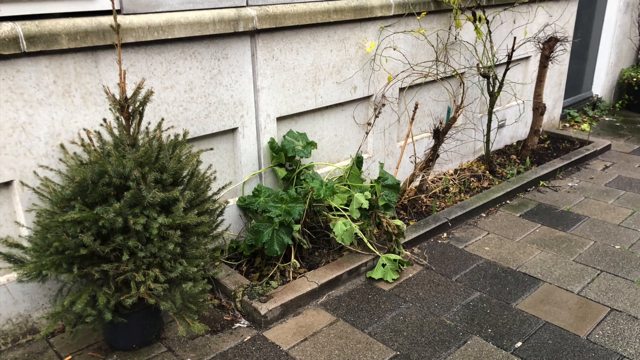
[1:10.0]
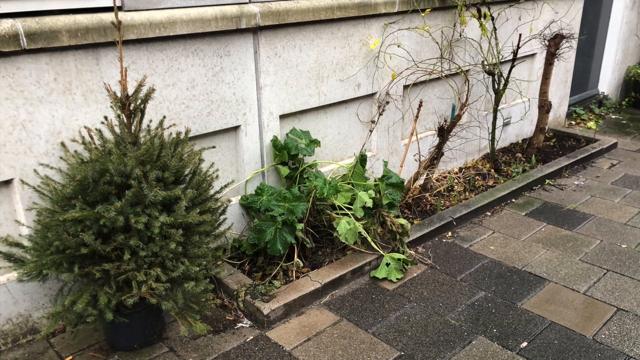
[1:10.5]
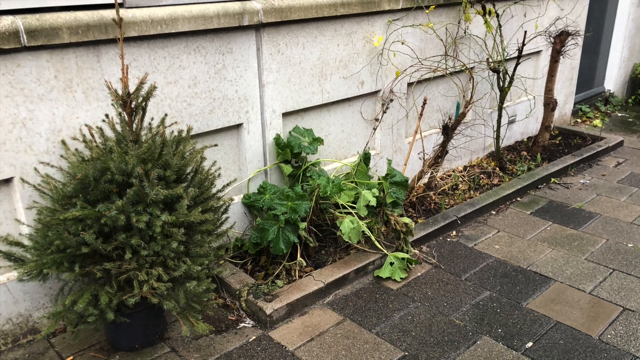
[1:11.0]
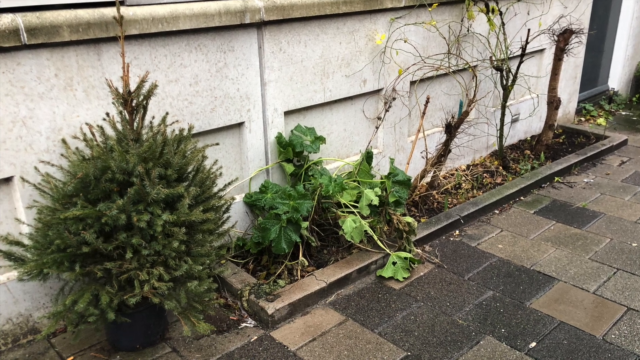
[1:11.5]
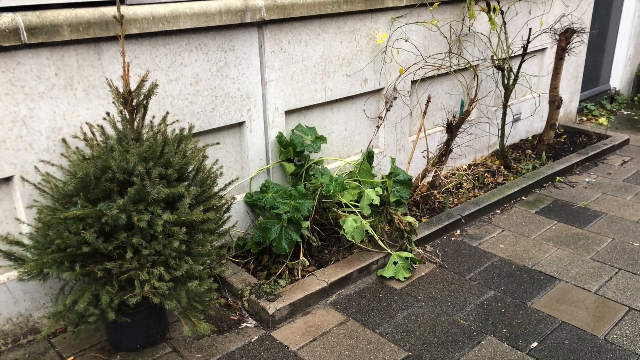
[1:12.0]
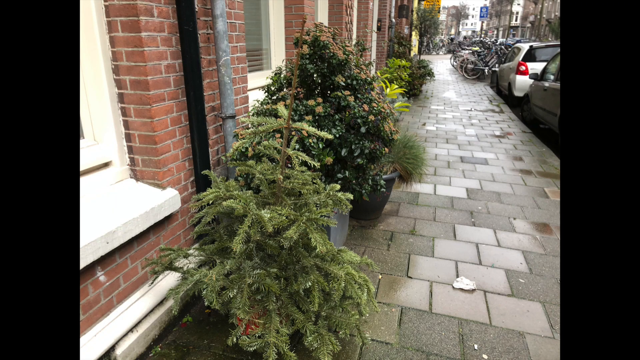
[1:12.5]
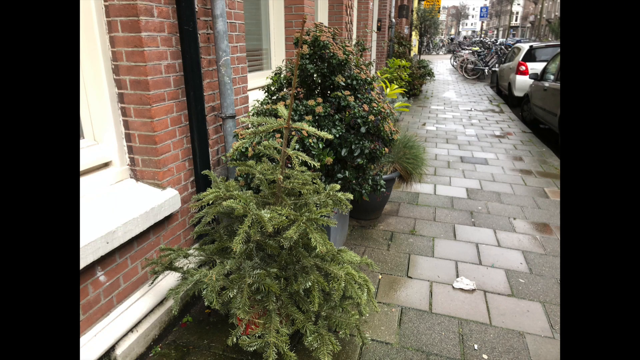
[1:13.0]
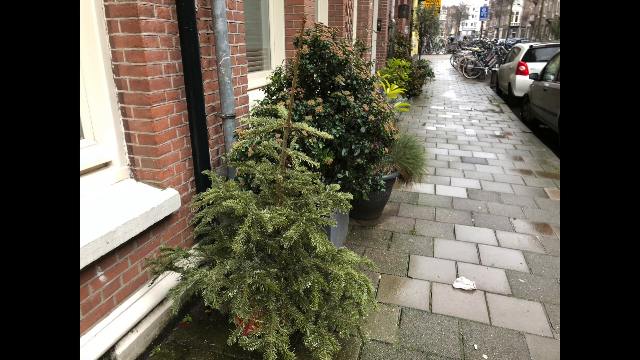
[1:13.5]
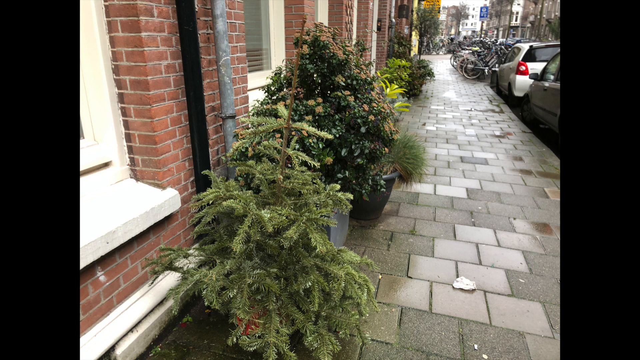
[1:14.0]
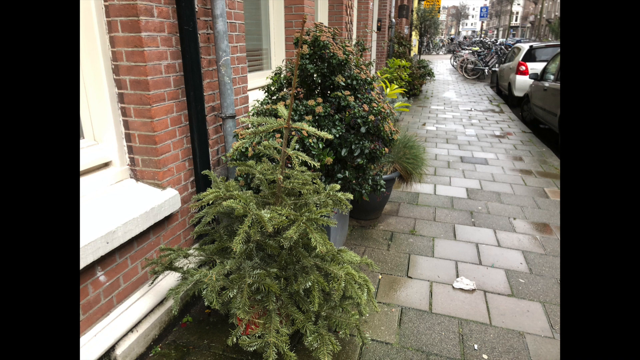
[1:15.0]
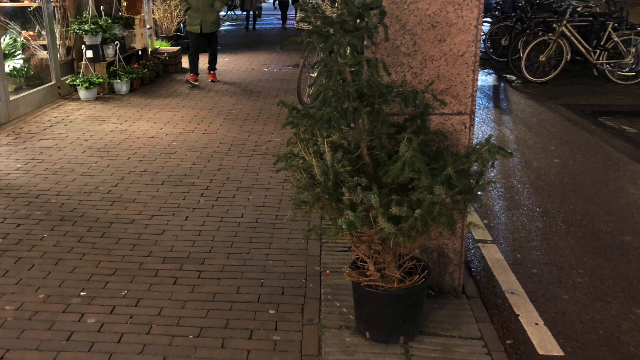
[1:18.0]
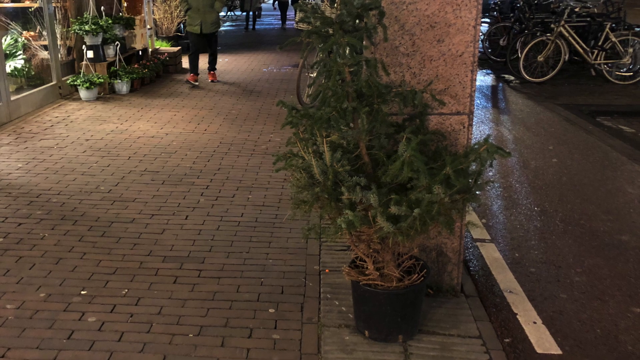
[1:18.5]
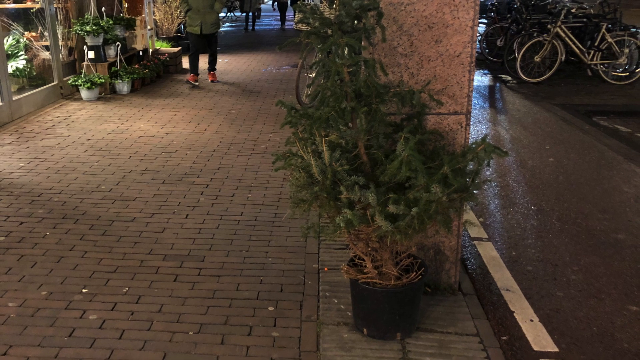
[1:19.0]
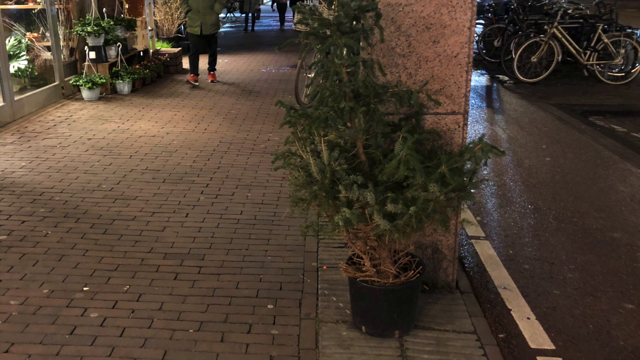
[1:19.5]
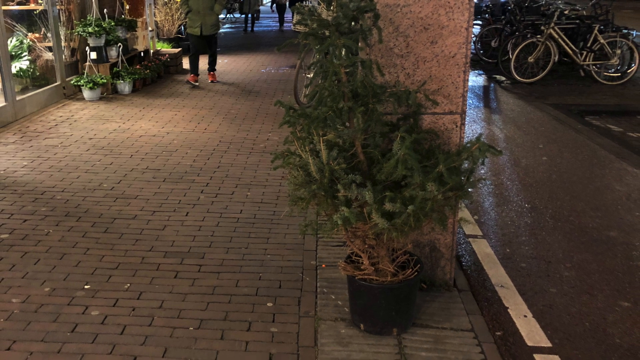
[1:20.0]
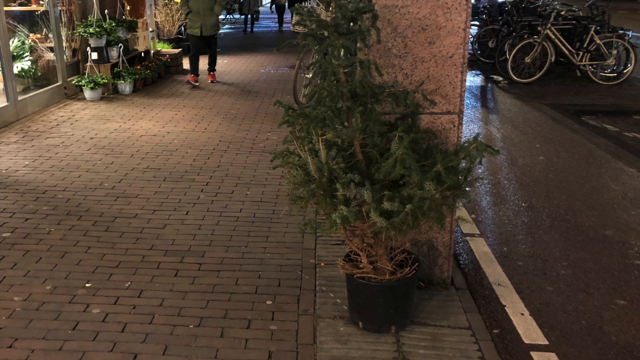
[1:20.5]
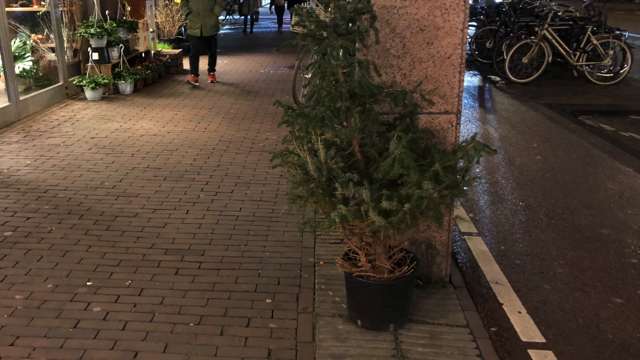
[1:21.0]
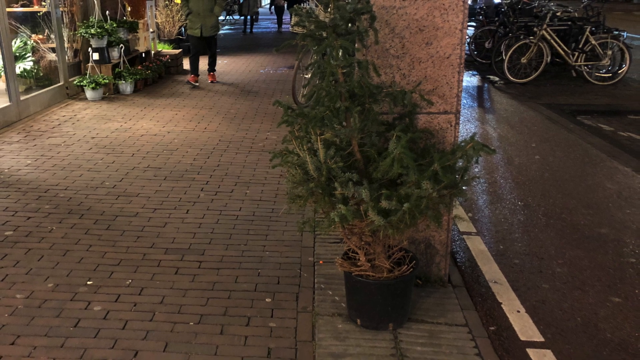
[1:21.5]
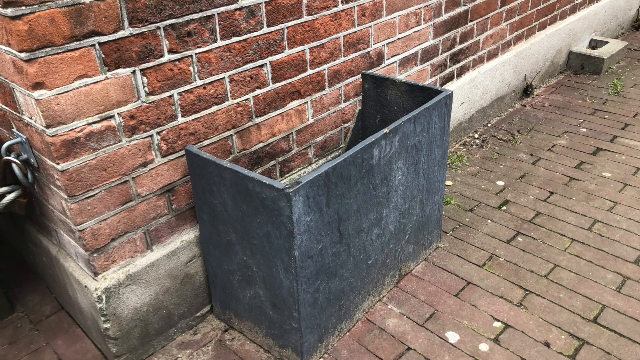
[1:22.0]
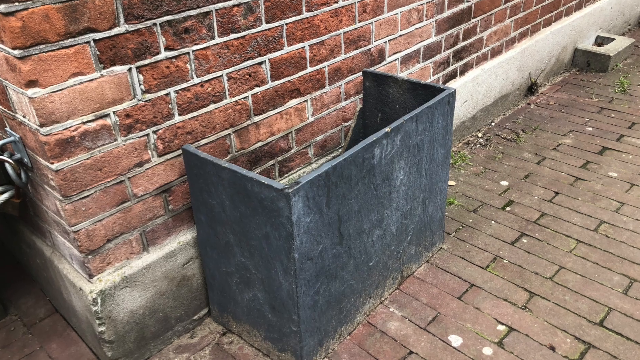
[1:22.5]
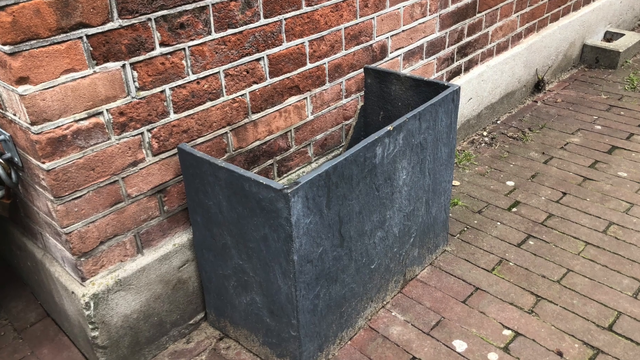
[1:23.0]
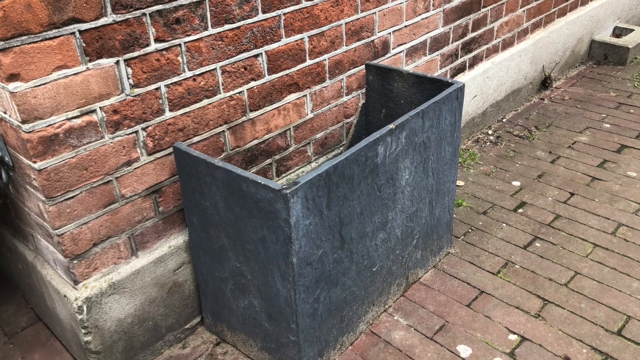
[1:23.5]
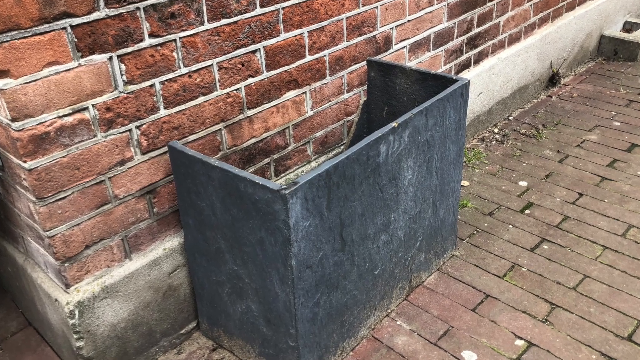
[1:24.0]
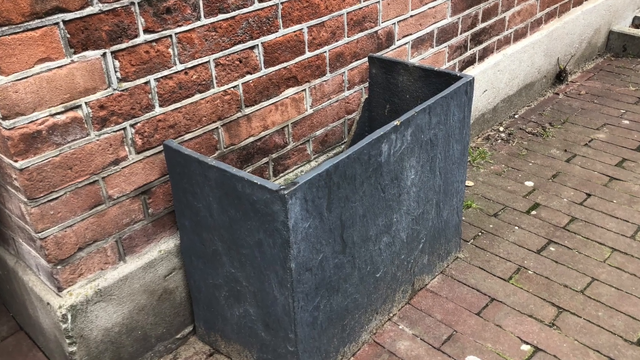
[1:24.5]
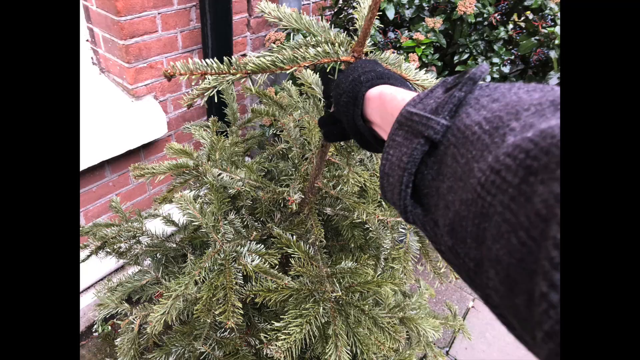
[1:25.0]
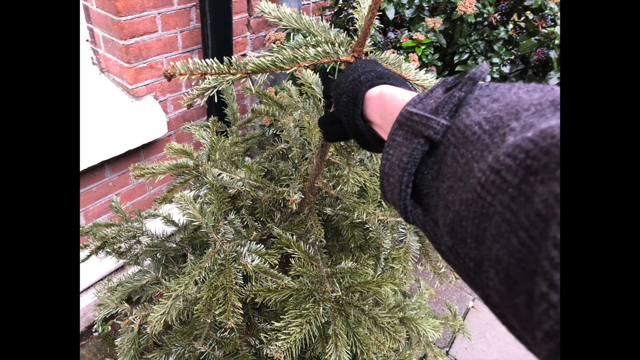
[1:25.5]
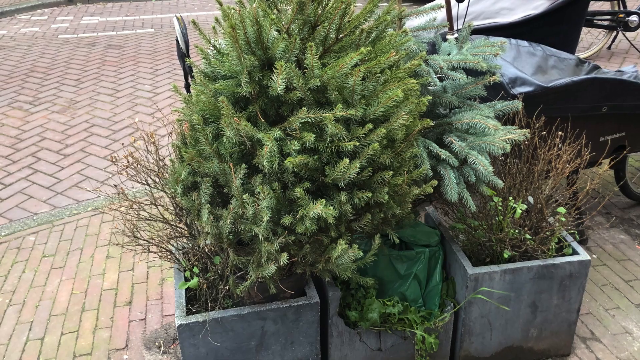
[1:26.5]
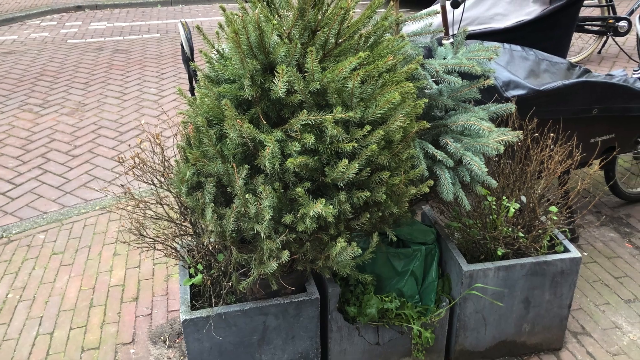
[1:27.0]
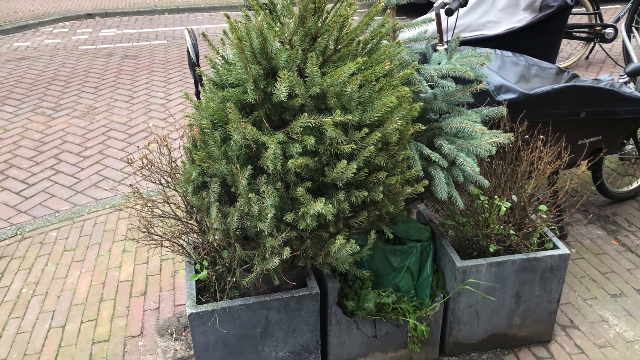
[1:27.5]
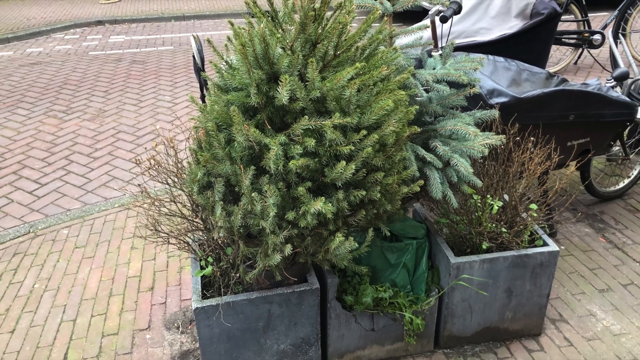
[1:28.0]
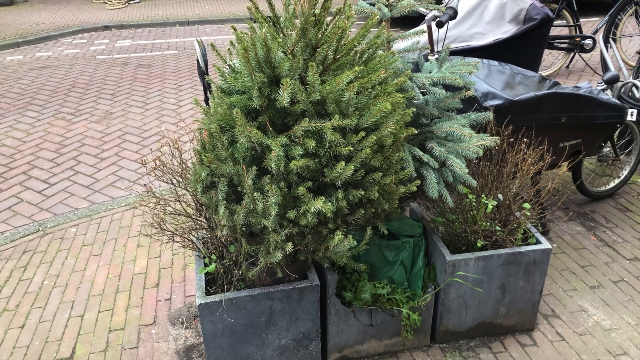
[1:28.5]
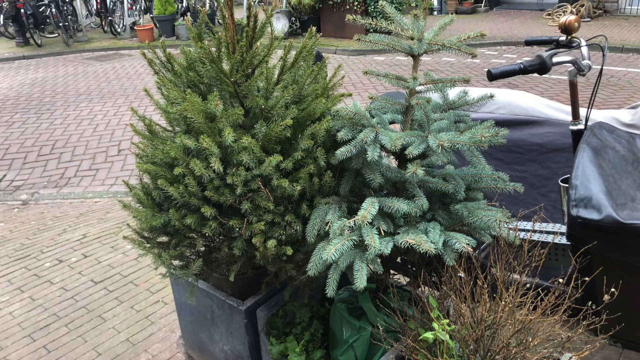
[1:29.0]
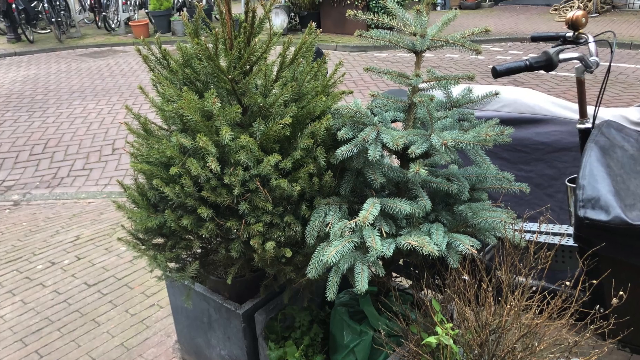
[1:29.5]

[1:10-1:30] Many bicycles are parked, along with parked cars. Plants by the park look very healthy, and some flowers are blooming. People walk on the pavement, and something broken lies by the pavement, possibly a flower pot. A white person is gardening and pruning, and the plants are in perfect condition. One bicycle looks like a quality one. The pavement is wet, apparently from earlier rain. There are blue street signs, and the streets are very clean with no litter on the ground.